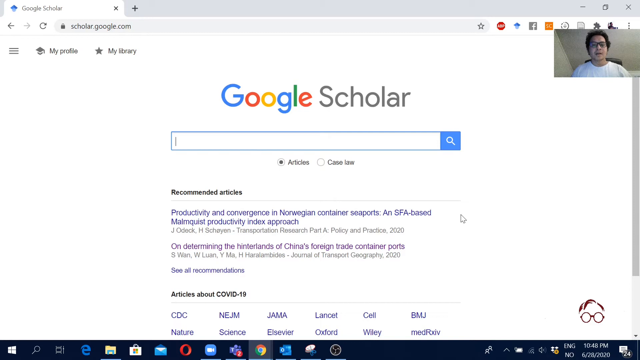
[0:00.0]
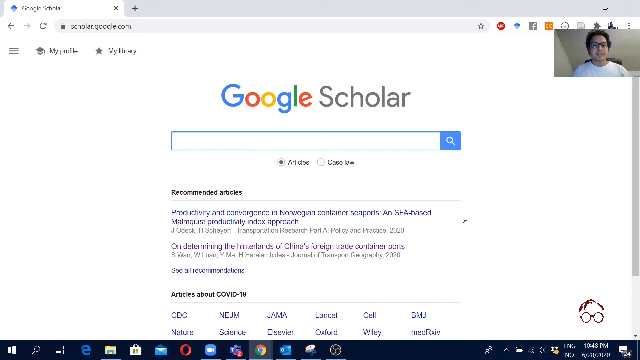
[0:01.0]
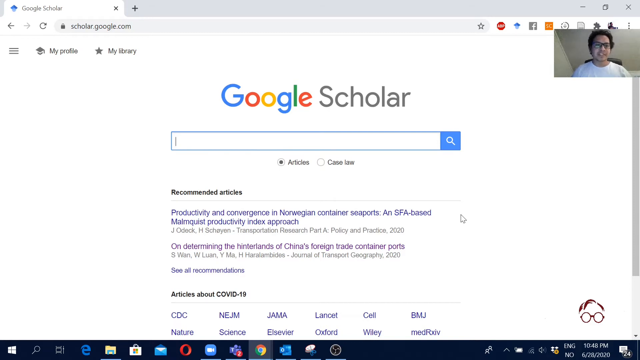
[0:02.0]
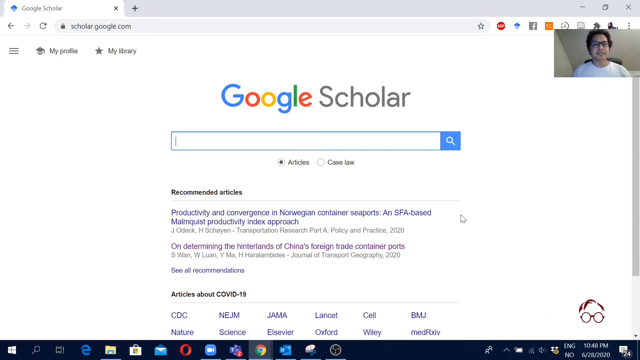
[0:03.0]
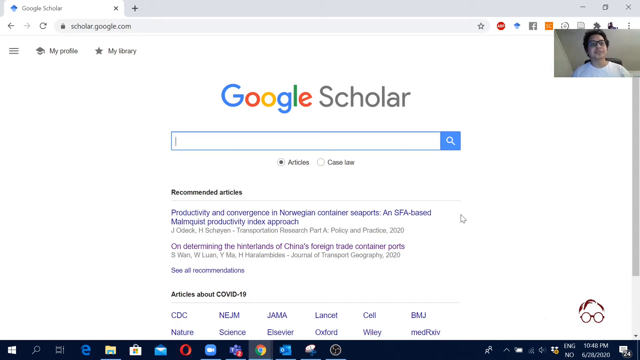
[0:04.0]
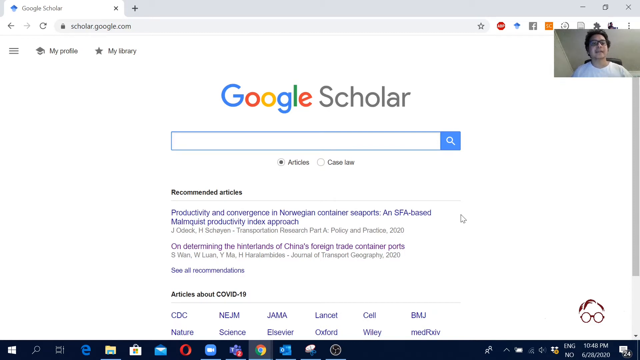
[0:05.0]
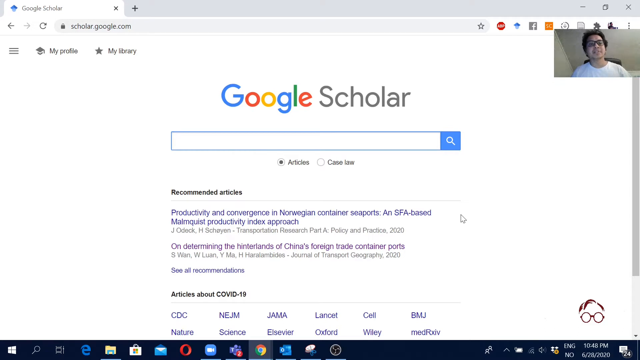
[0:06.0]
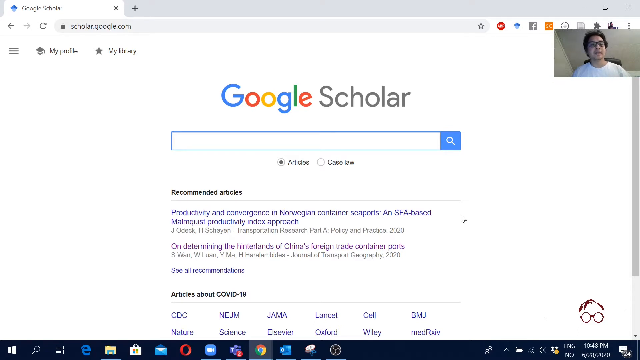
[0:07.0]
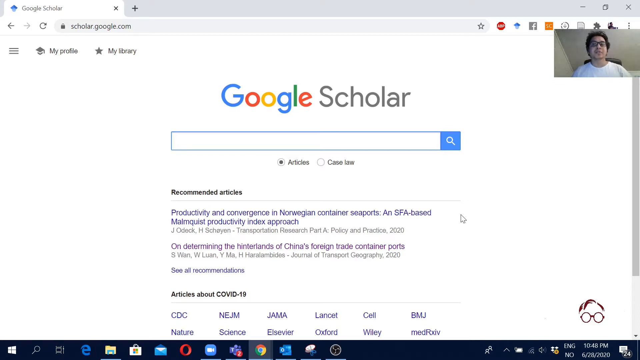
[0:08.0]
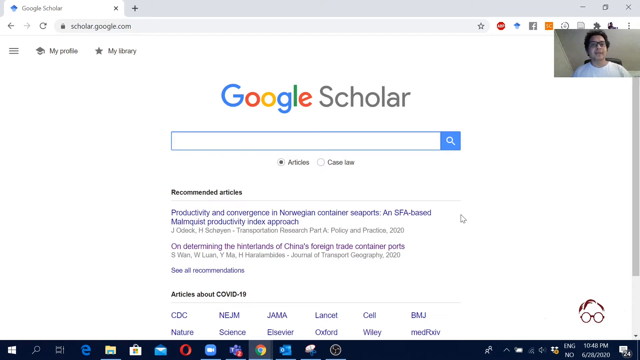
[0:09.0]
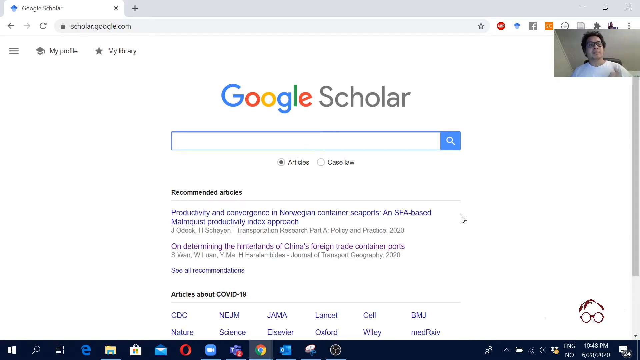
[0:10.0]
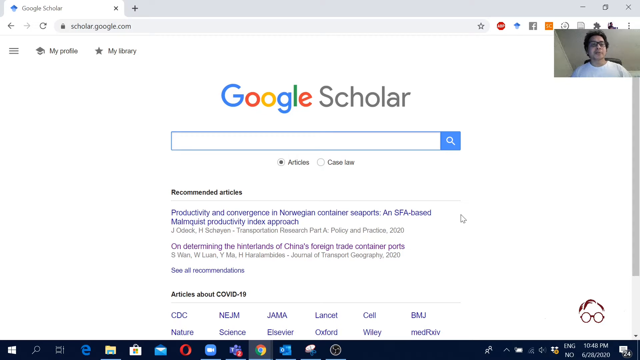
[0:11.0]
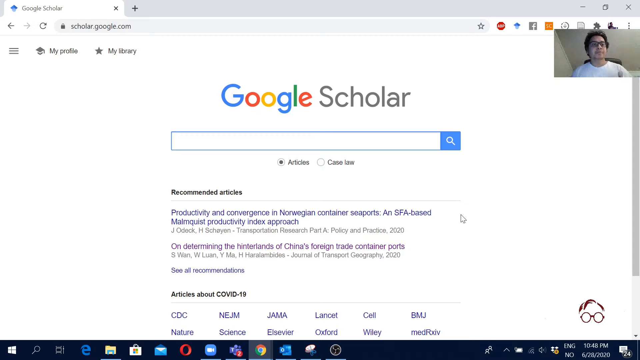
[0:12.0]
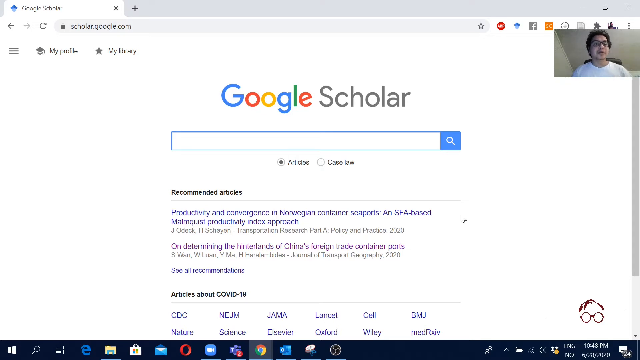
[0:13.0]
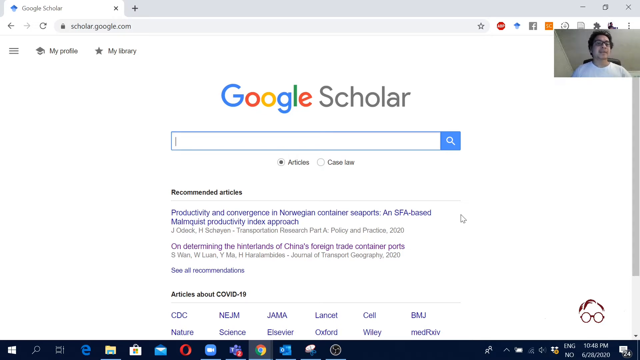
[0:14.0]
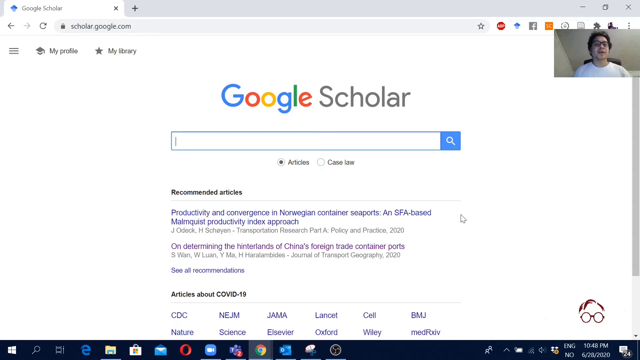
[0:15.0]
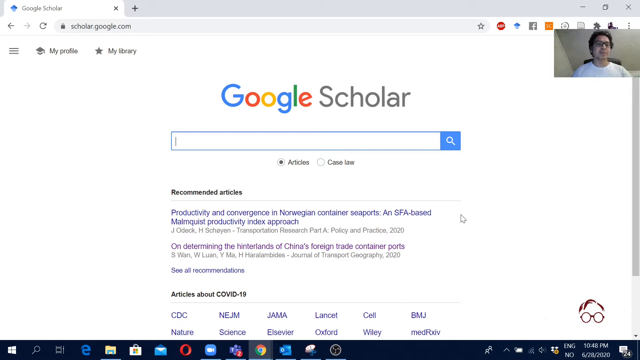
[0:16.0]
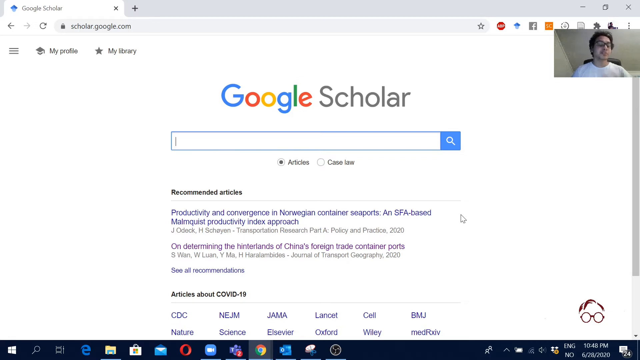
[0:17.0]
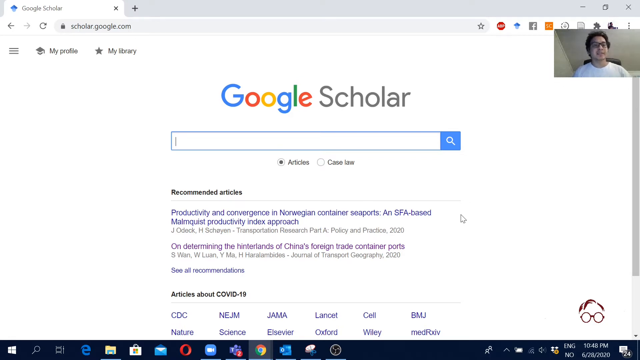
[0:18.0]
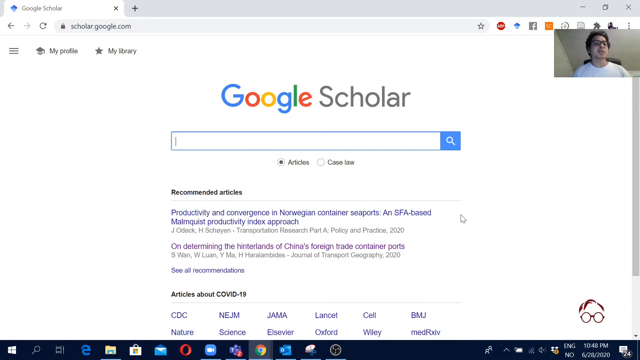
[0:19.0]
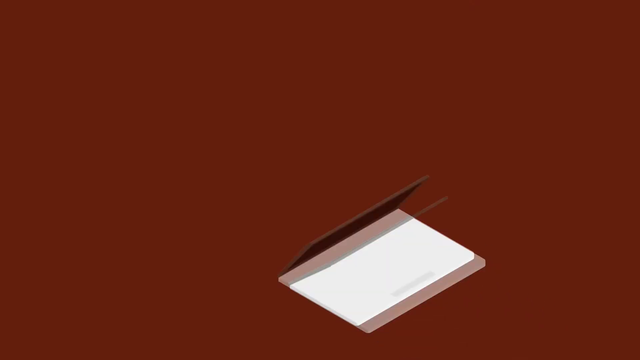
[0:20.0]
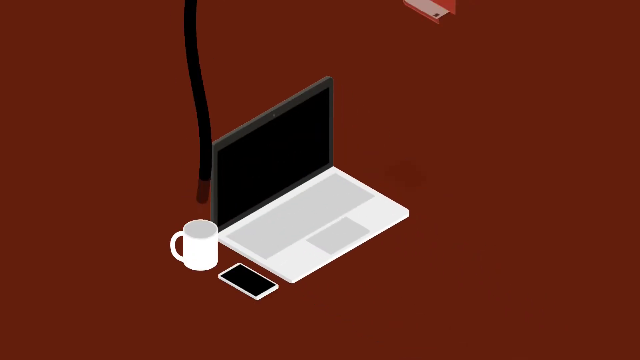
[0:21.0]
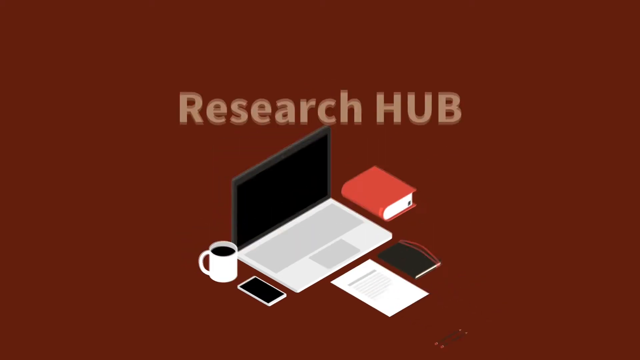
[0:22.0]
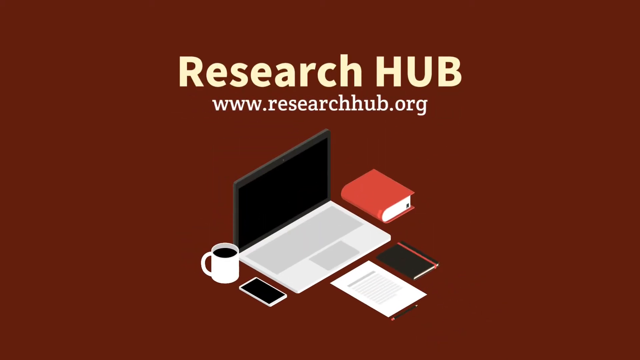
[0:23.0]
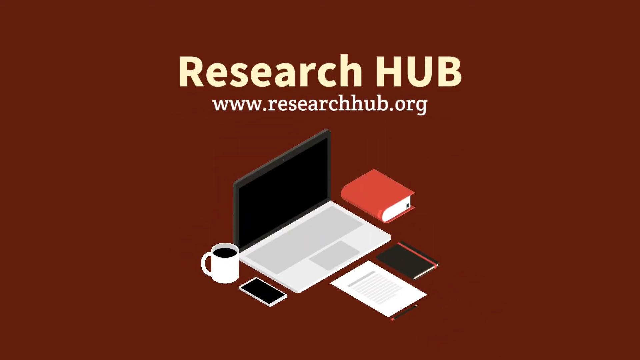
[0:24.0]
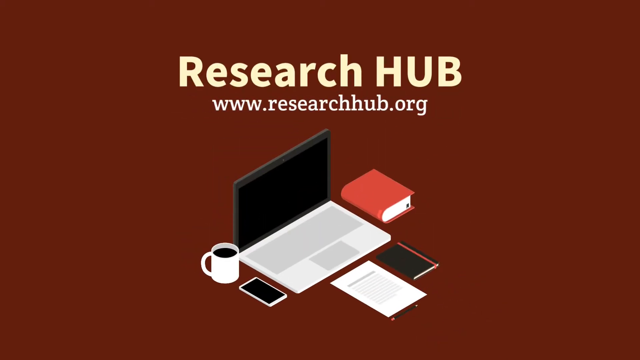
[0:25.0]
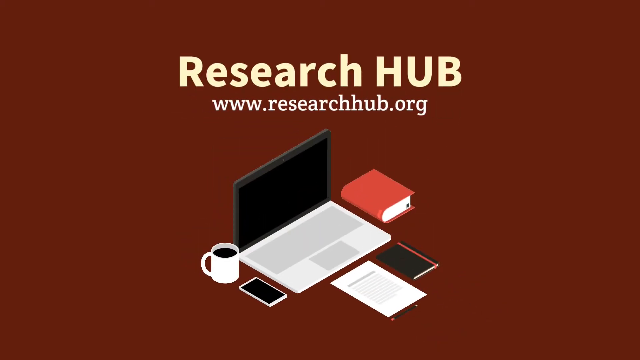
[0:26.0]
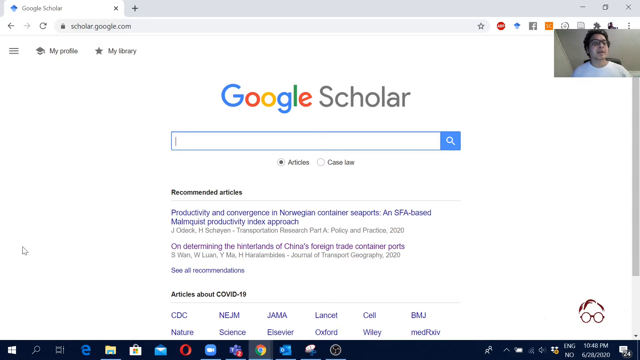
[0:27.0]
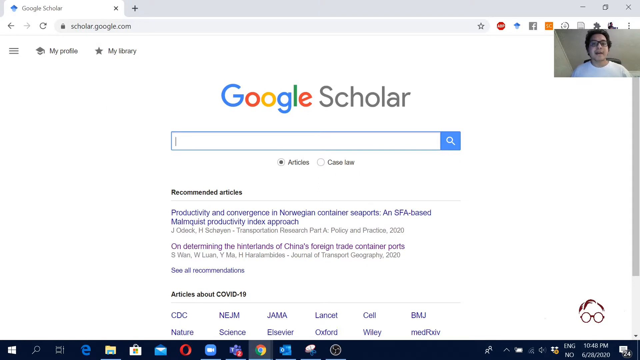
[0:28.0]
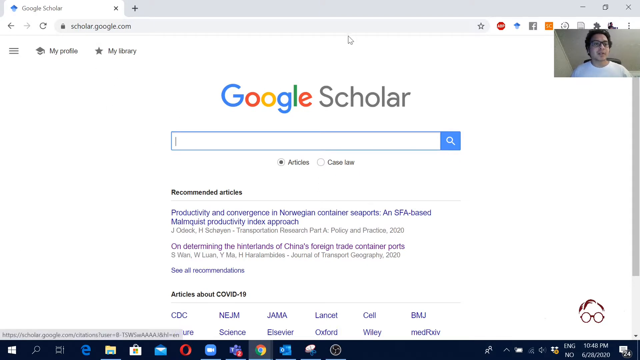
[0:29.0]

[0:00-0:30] A Google Scholar page is open on someone's computer, and a small box in the upper right-hand corner shows a person who is probably going to demonstrate how to do things on the computer. The man in the corner is talking and moving his hand slightly. He wears a white t-shirt and dark glasses, has dark hair, and looks young, maybe in his 20s. A page then opens that says "Research Hub" with "www.researchhub.org" underneath, and a computer opens. These visuals are digitally produced and include a coffee cup, a phone and a dictionary. The man moves the cursor around the screen, and the view returns to the Google Scholar page, where the cursor moves before stopping.